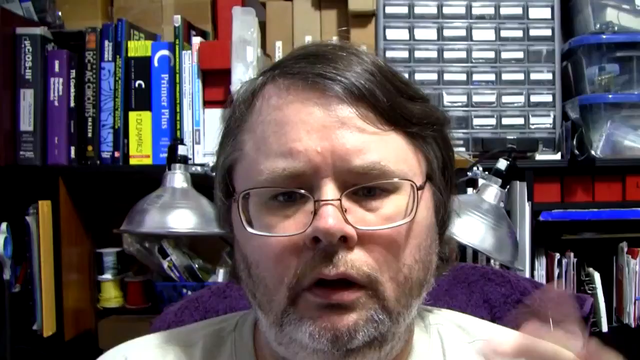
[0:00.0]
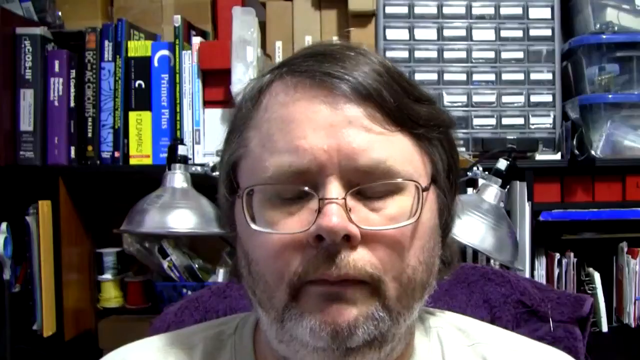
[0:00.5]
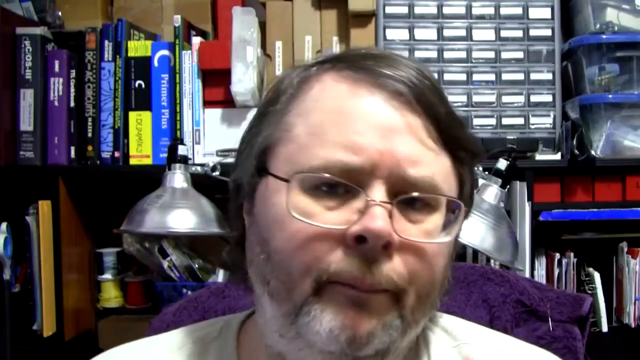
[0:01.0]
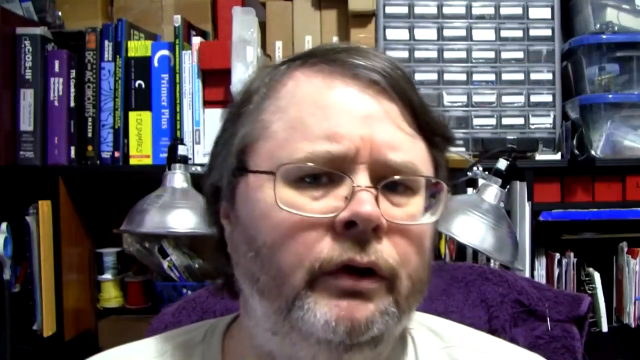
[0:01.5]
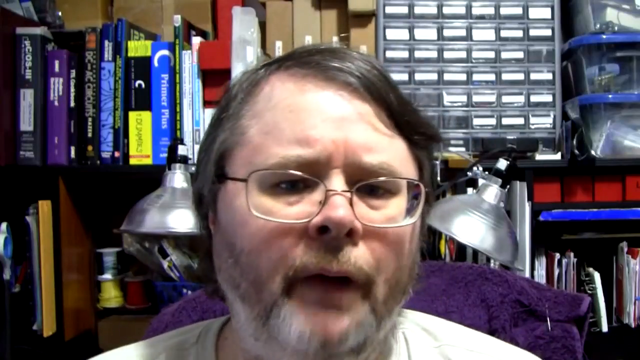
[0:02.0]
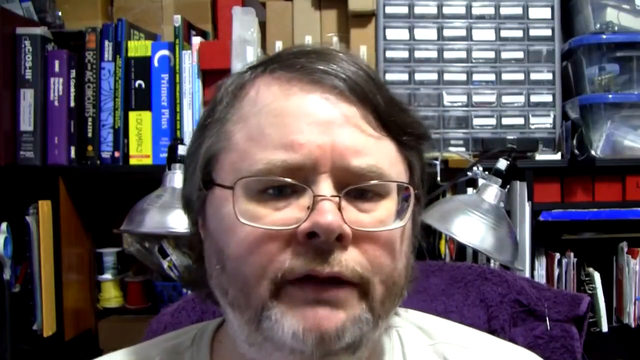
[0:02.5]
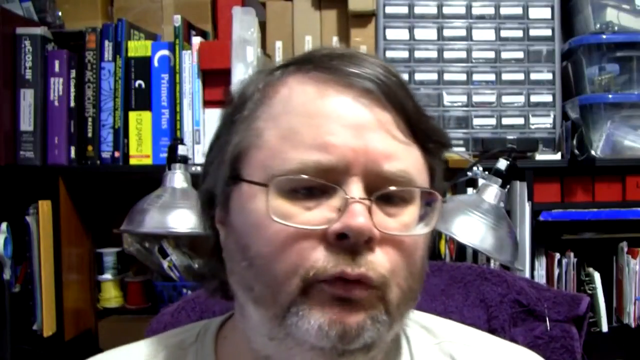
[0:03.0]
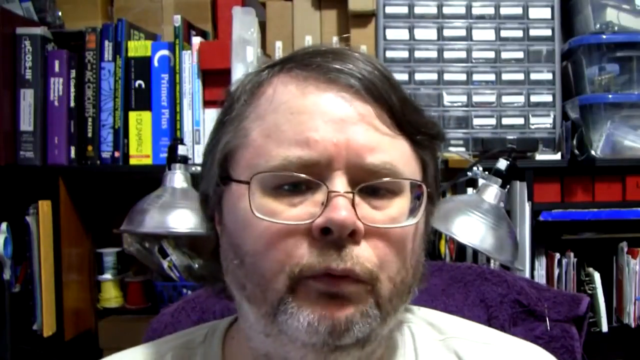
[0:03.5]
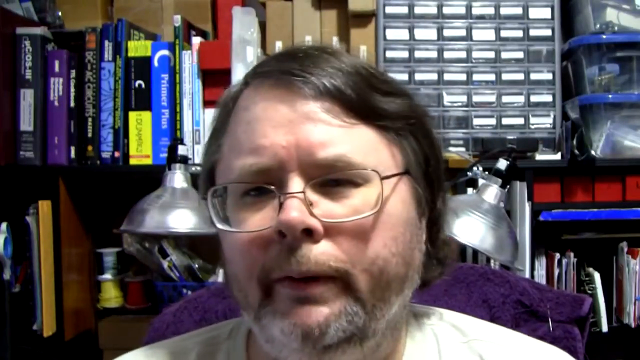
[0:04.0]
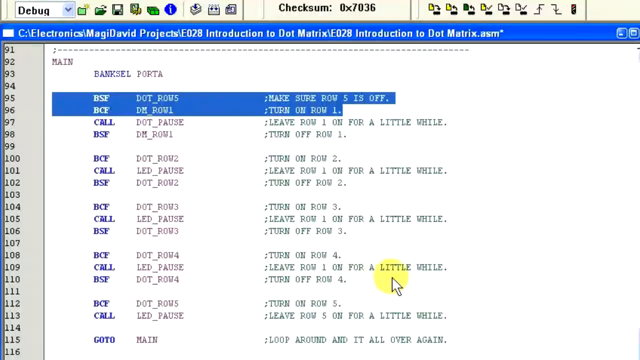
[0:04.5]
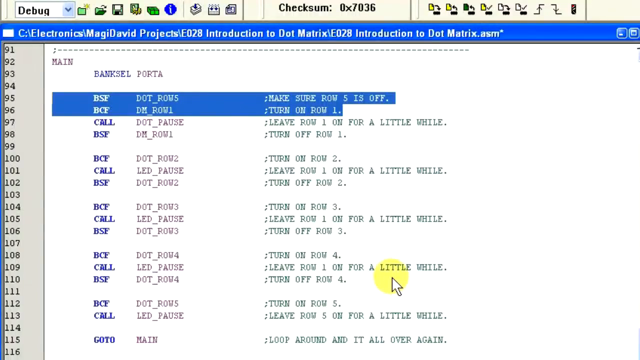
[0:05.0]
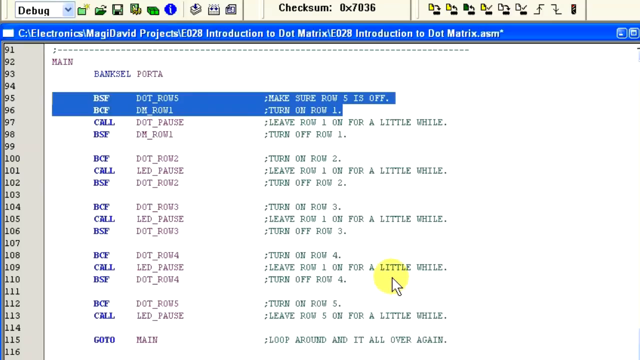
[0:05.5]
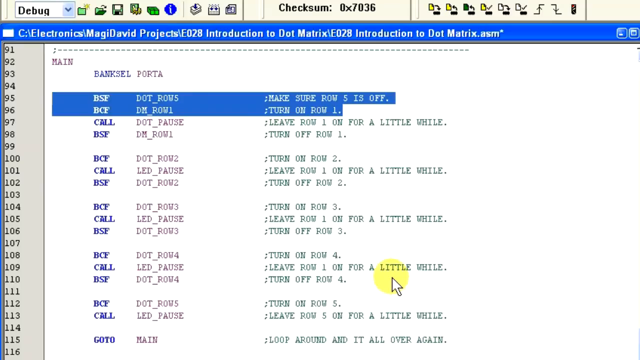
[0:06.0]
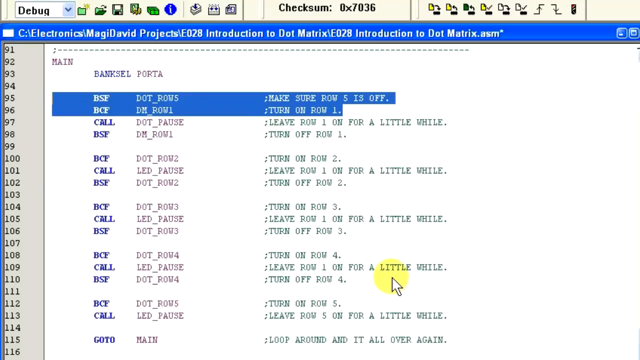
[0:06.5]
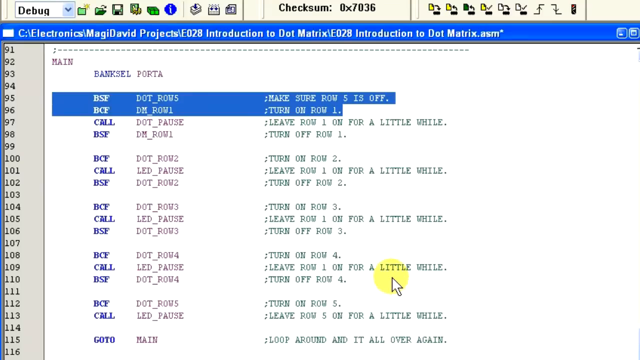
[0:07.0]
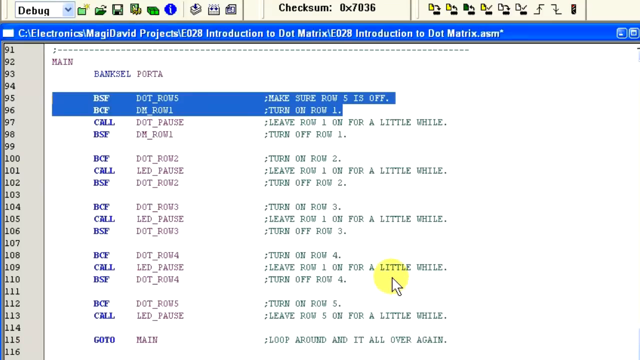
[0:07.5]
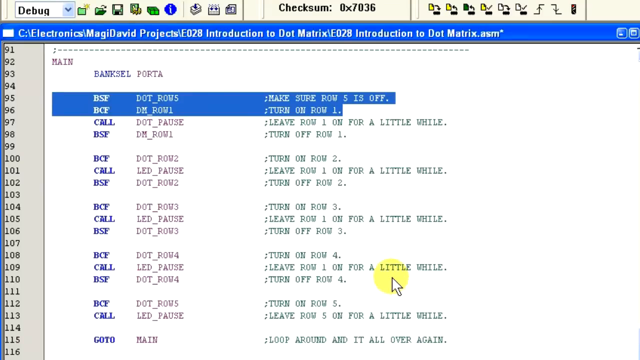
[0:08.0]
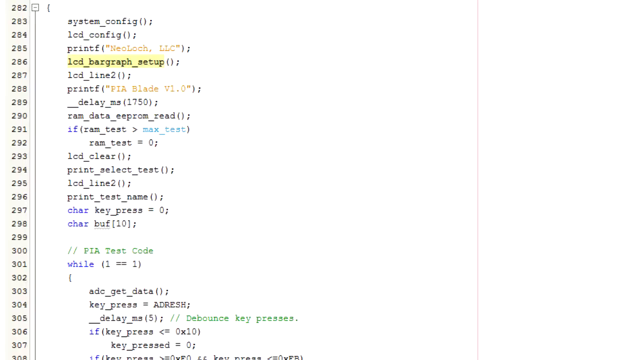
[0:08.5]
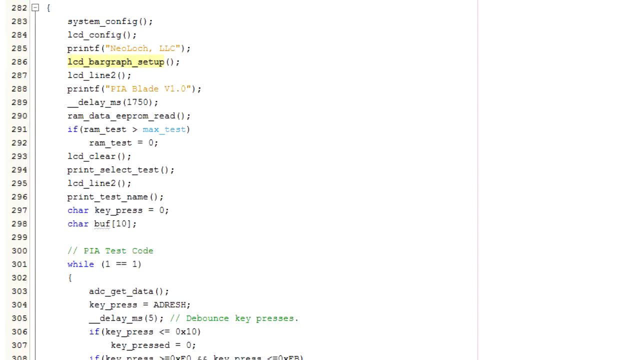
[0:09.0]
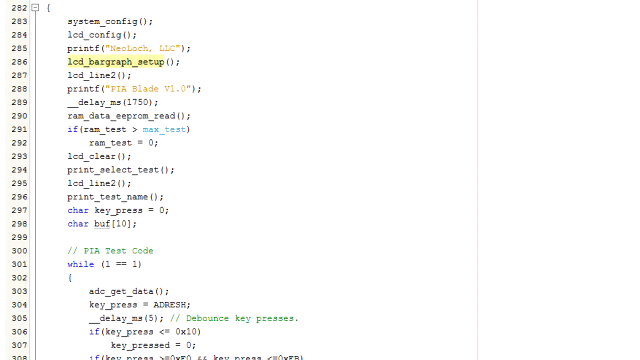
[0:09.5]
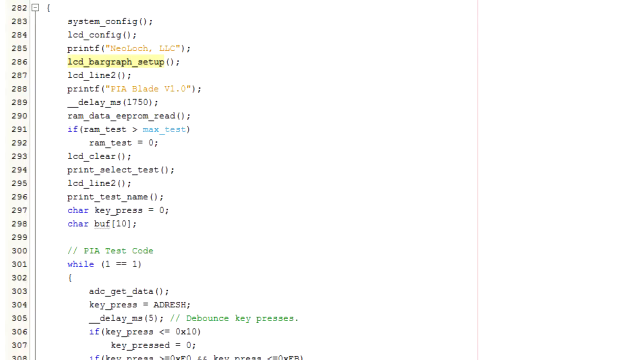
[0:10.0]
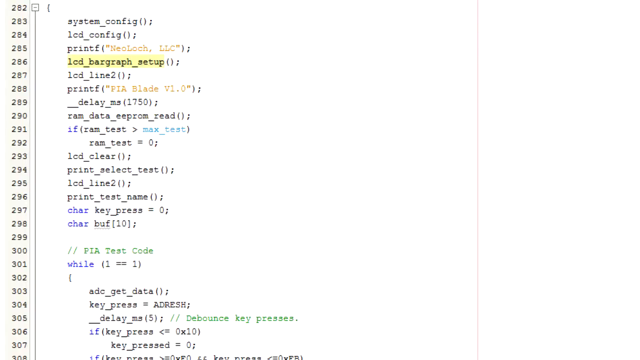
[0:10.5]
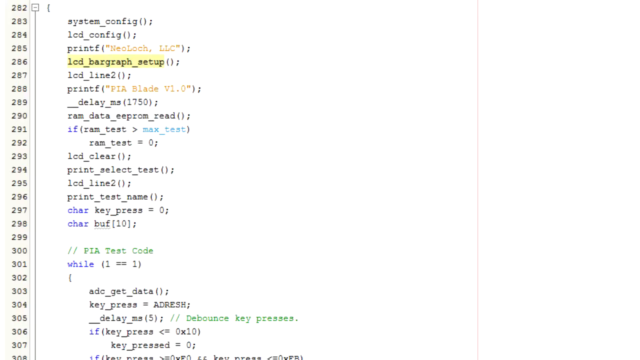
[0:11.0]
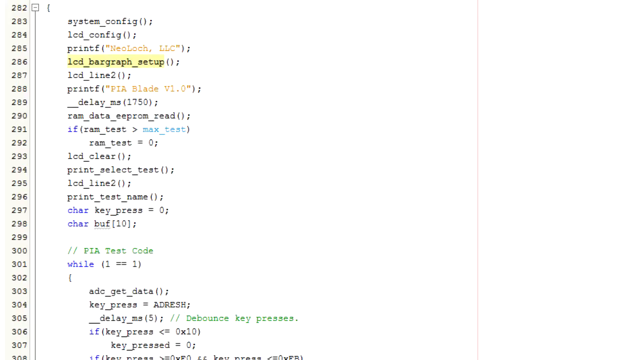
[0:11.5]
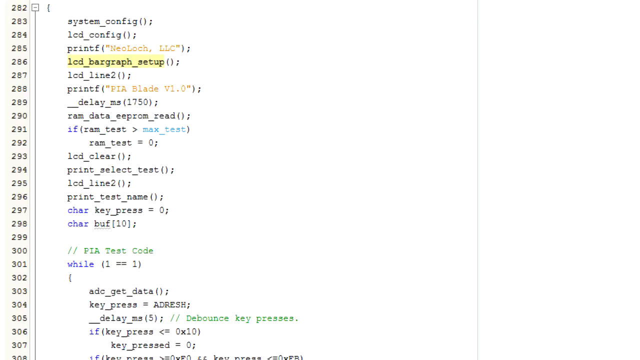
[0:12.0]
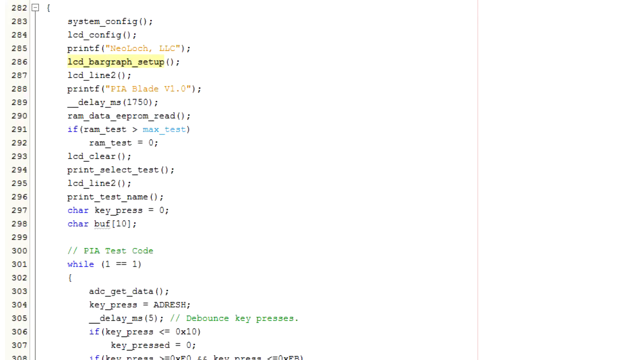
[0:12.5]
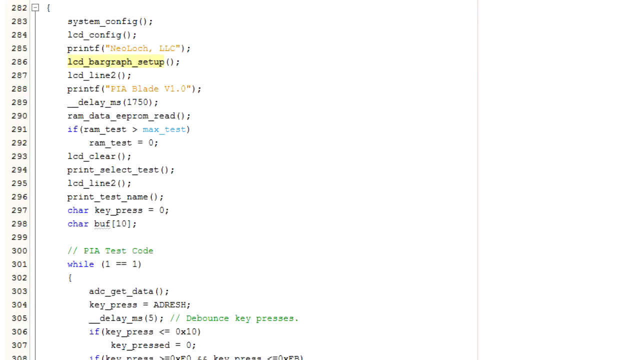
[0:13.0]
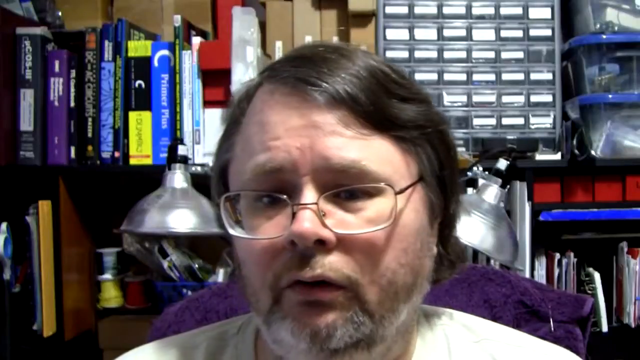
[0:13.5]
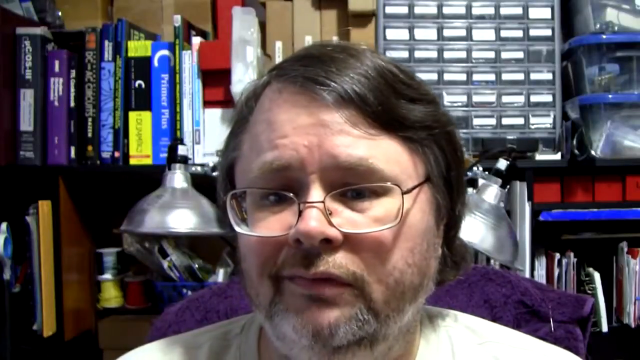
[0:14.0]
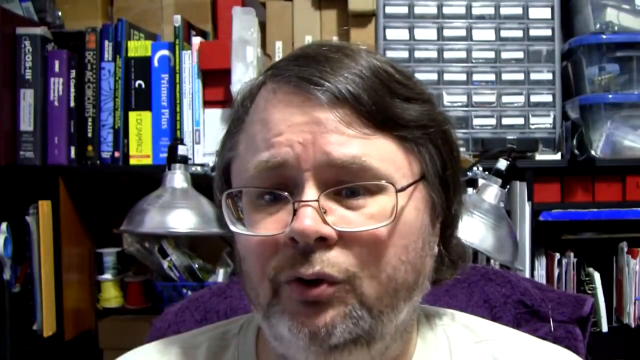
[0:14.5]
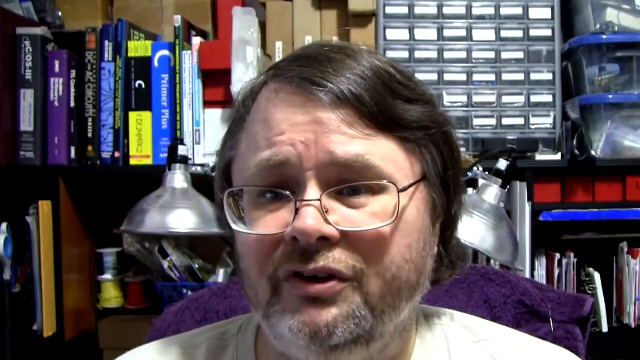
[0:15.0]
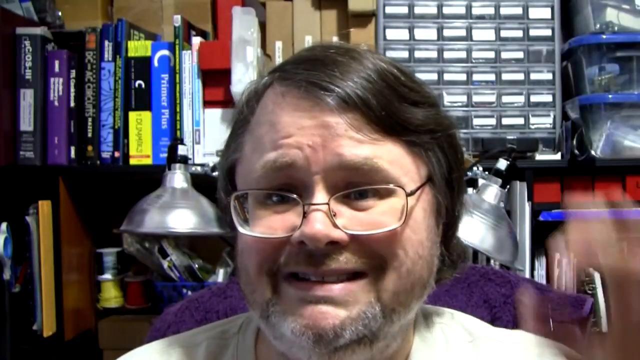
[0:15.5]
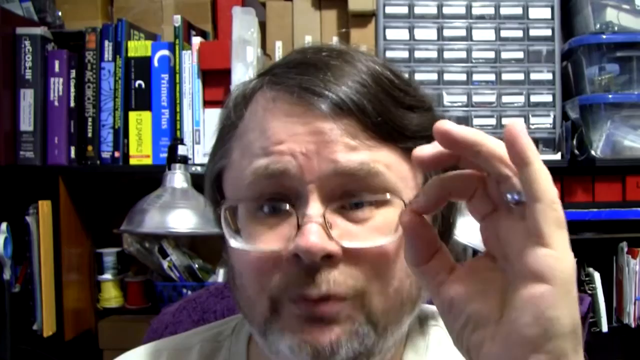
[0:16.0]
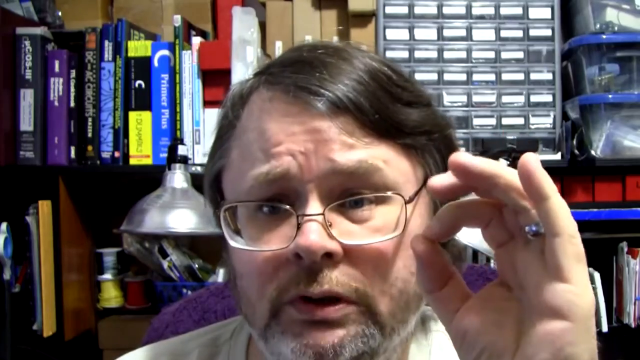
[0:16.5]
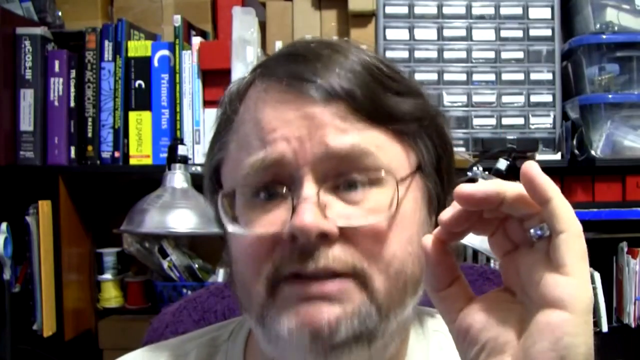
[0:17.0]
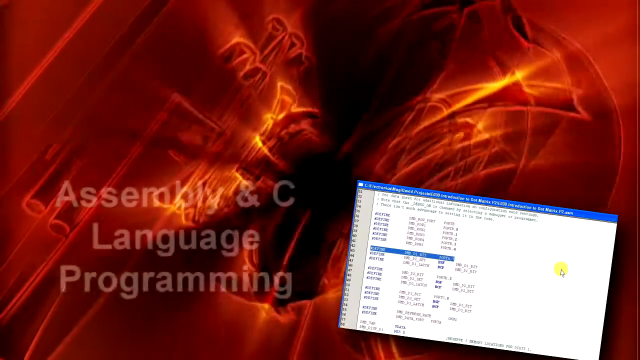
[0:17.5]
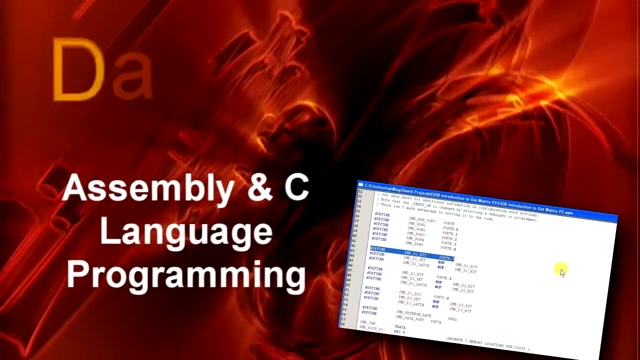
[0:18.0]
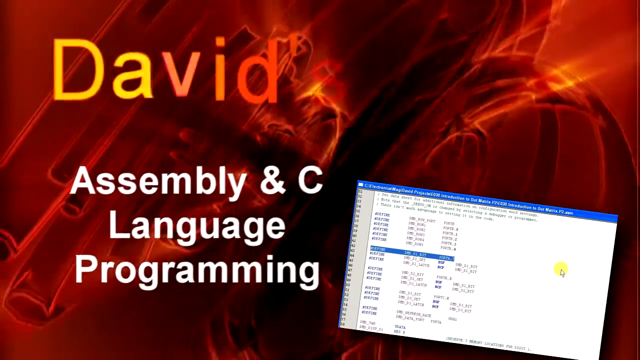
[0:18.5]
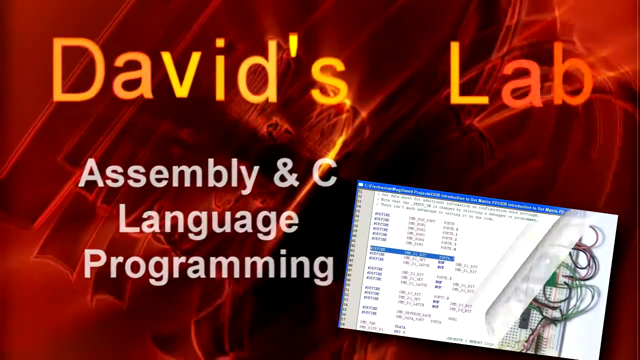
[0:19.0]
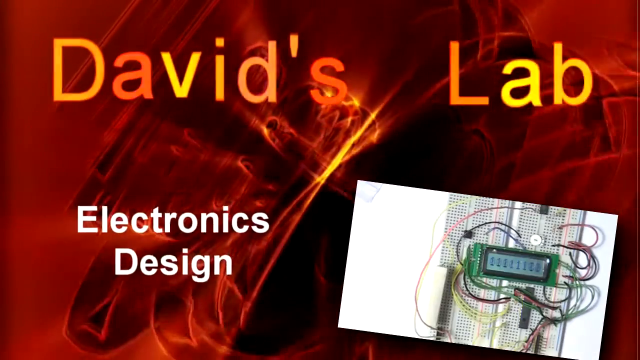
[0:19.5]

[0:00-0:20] The video begins with a heavyset Caucasian man who seems to be in his forties or older, wearing standard corrective glasses. He is in what looks like an office or workshop area, maybe one he owns. Two lamp-like objects are on both sides of his head behind him. A bookshelf is above his right side, which appears as the left side to the viewer, holding several books of various shapes, sizes and colors whose titles cannot be made out. In the top right are more storage containers: clear containers with blue tops and a glossy finish. He moves his head left and right as he speaks, looking into the camera. The video then transitions to a computer screen with a white background showing what looks like some form of code, with phrases to the right. At the far left edge are black numbers running downward: 91, 92, 93, 94, 95. After some gray space a white background begins, showing the word "MAIN" in capital letters, then "Banksy", then "Porta" next to it. Banksy is blue, while Porta and Main are reddish. Banksy and Porta each have their own lane beneath them, each a list of different codes such as "BSF", "BCF" and "CALL", with entries like "LED_pause" and "._row two" on the right side. To the far right, next to each line, are phrases of regular English in green.